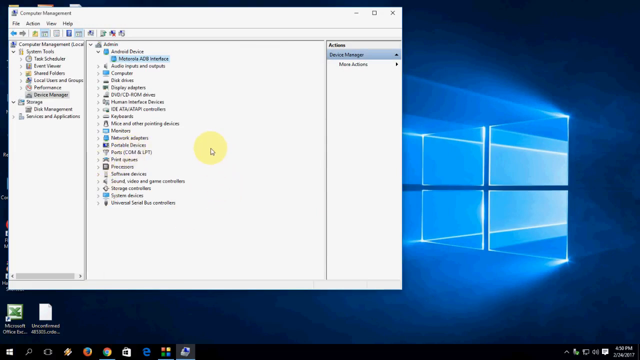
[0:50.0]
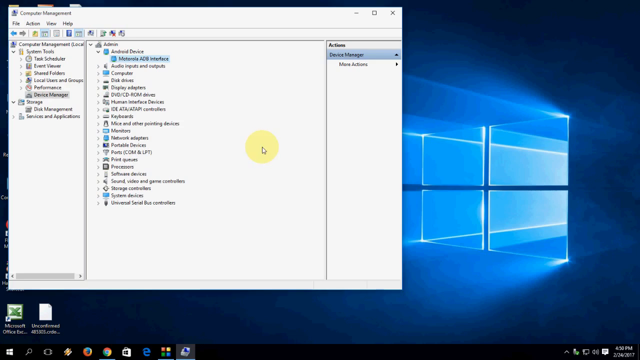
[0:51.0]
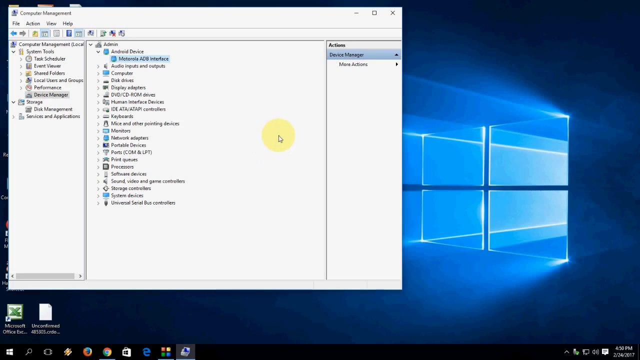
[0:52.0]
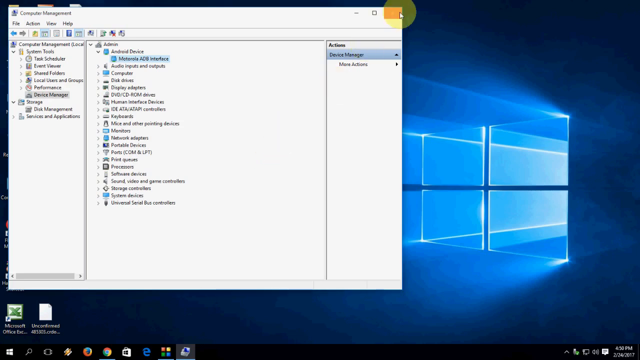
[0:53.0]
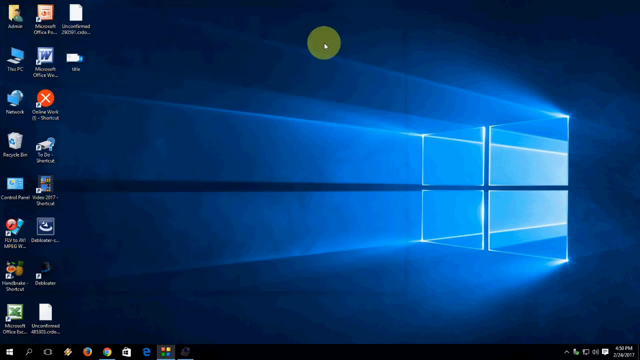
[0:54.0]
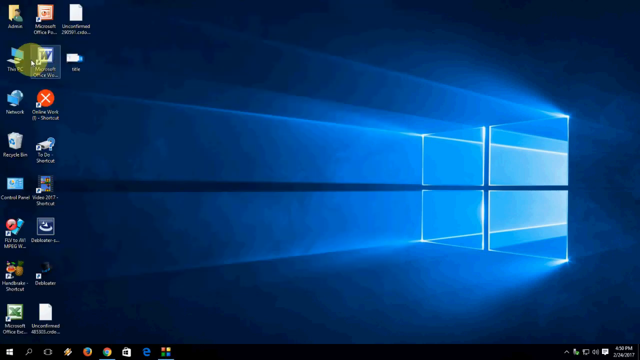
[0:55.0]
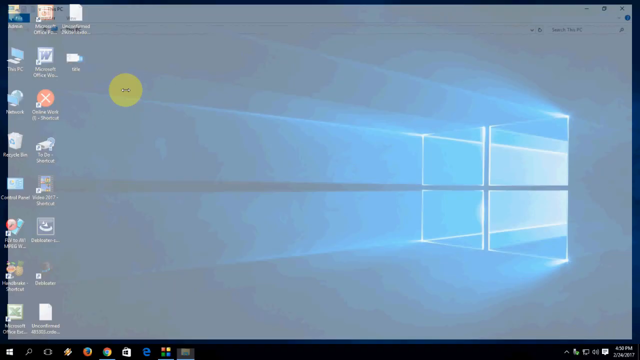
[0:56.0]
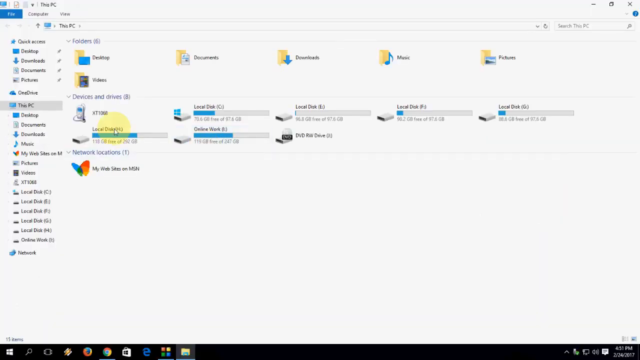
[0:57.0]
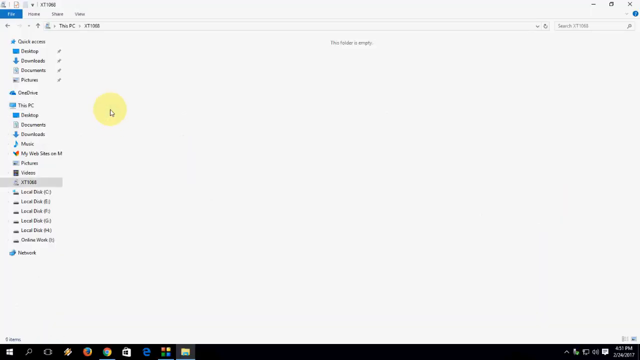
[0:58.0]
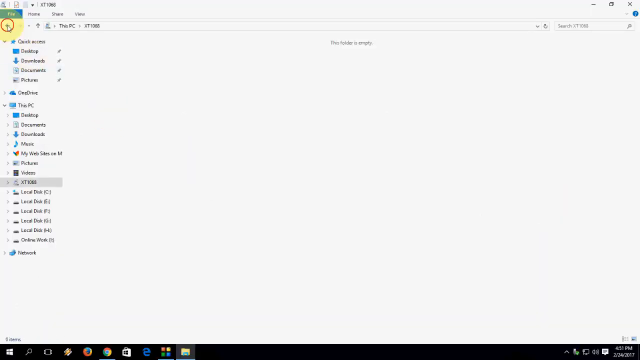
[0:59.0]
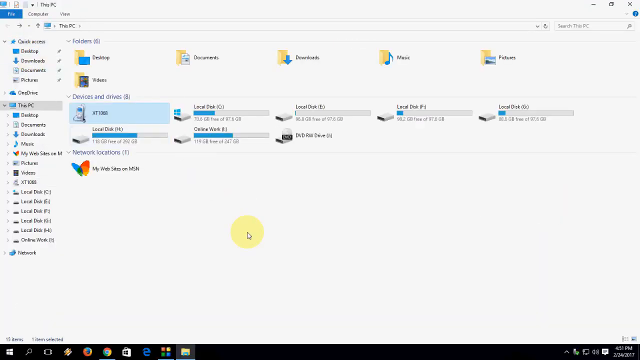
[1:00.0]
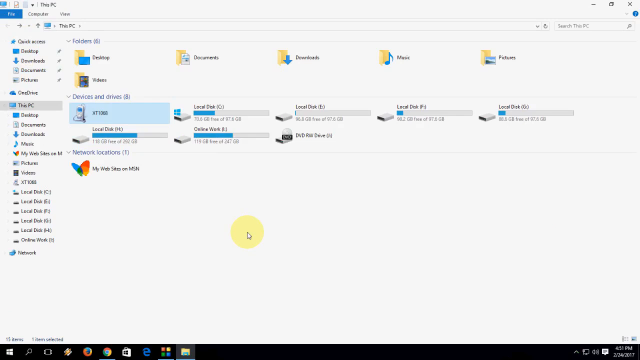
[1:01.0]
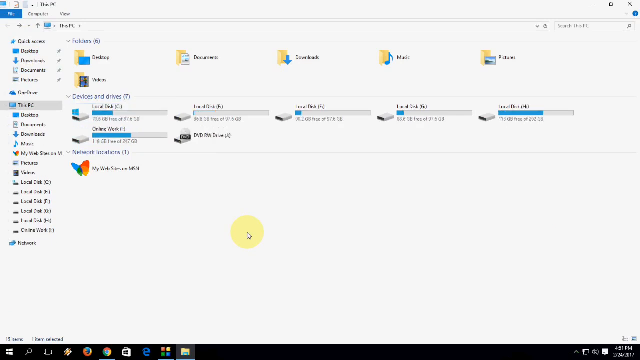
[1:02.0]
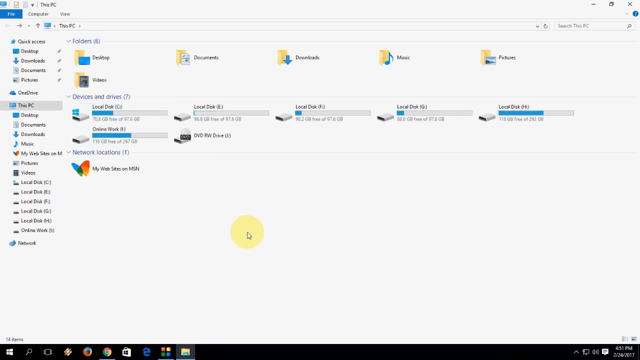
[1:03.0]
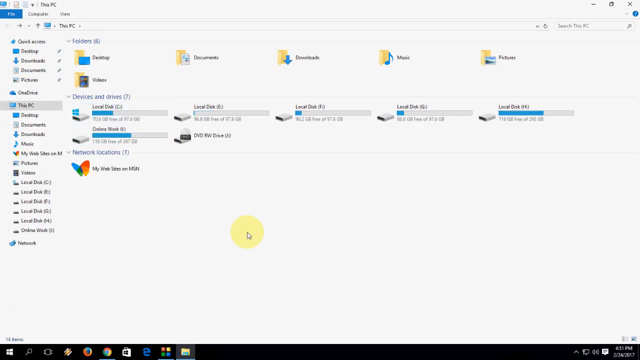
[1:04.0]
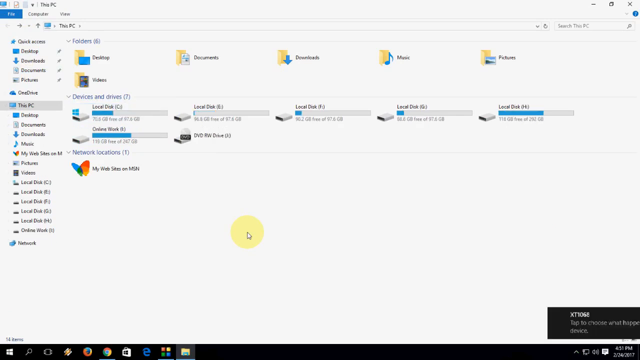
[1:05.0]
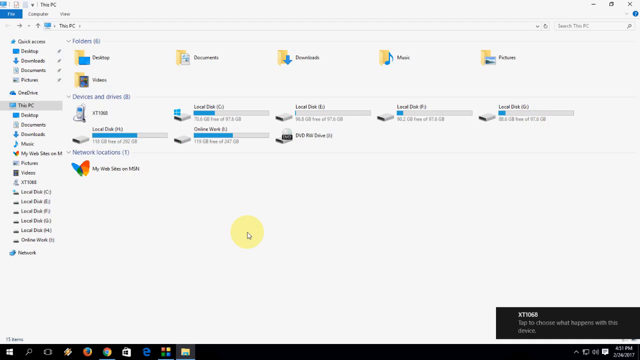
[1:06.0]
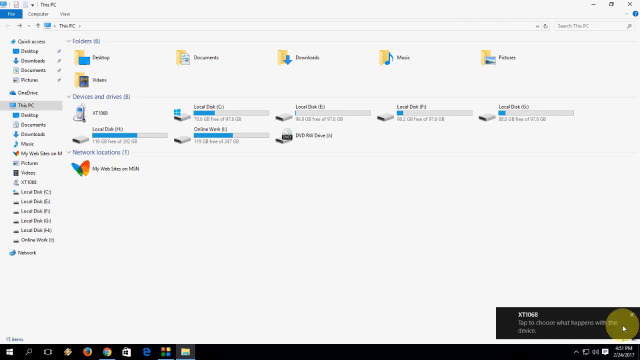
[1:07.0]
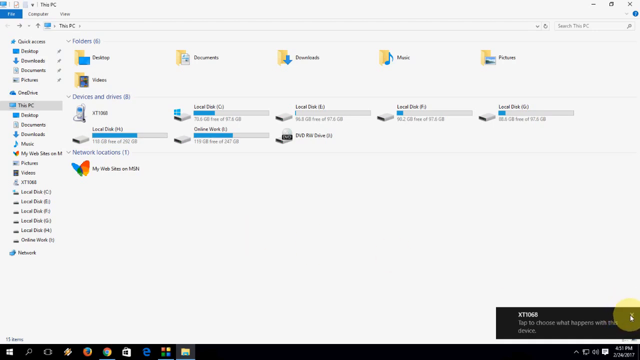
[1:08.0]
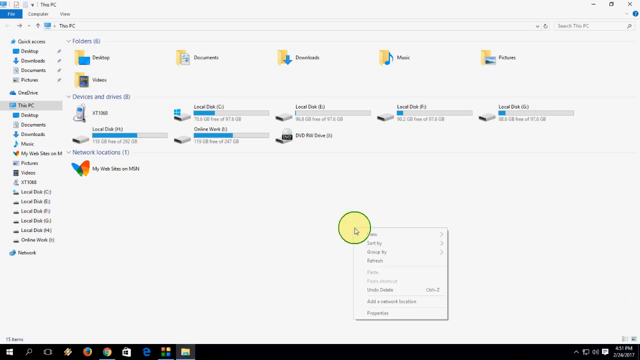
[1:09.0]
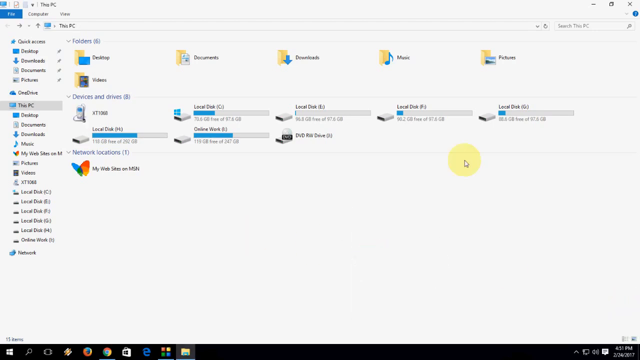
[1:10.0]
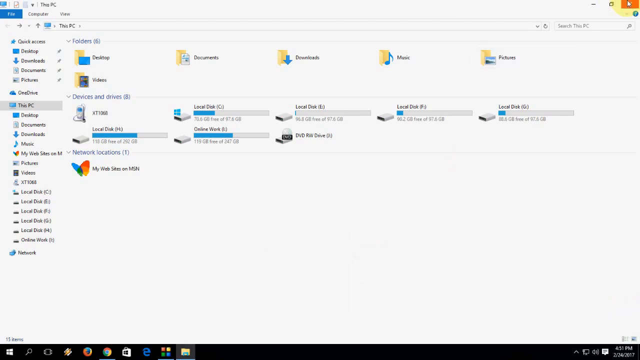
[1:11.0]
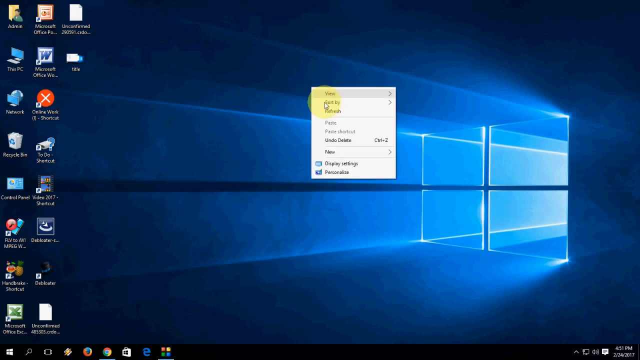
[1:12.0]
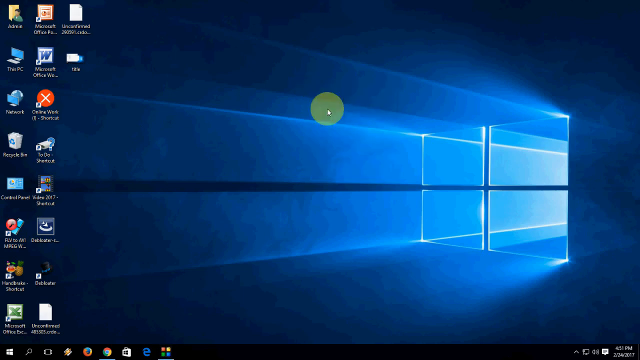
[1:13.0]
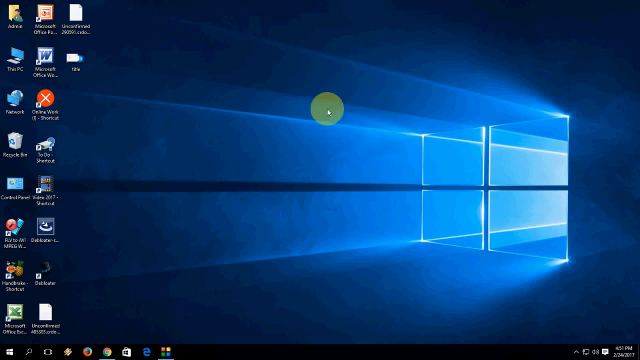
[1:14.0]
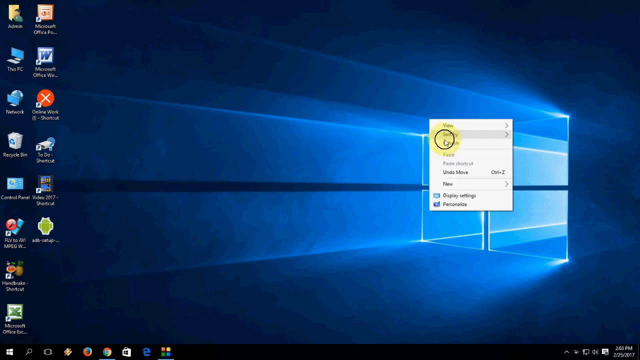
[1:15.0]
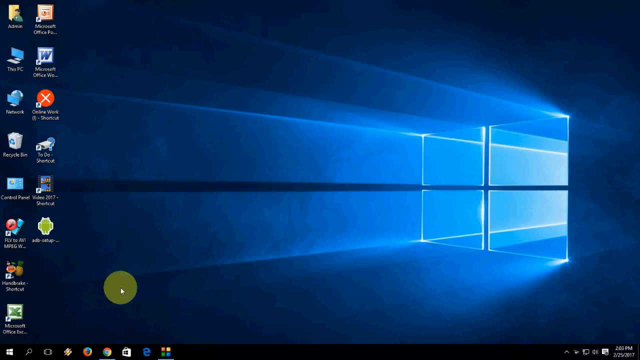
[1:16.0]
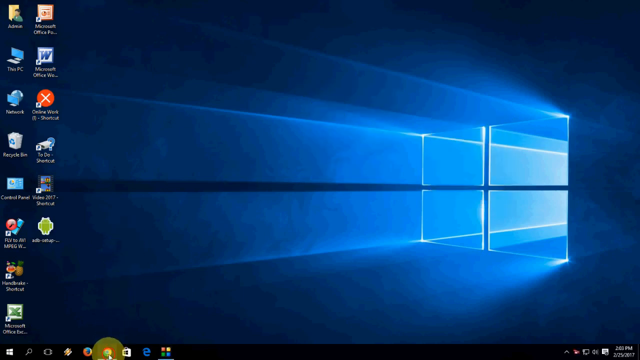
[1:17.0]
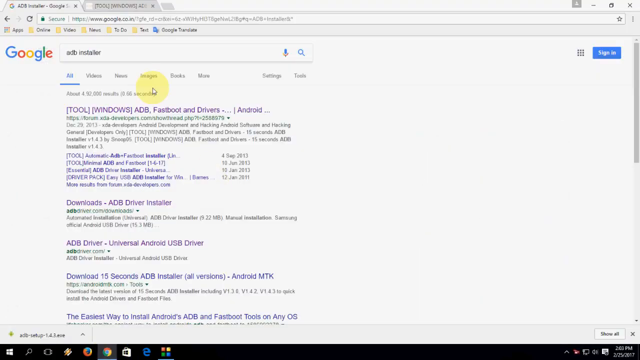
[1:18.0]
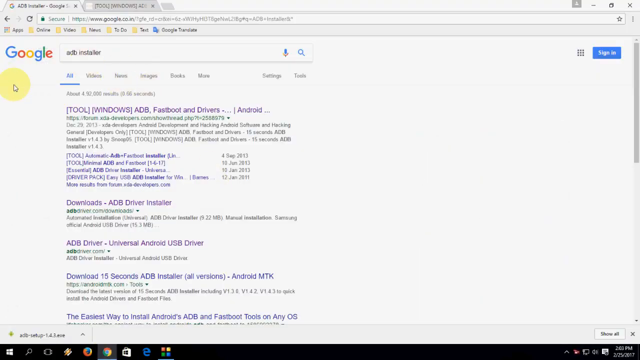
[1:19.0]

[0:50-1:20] The person moves the cursor to the upper corner and clicks the "X" button to close the Computer Management window. They re-select the This PC icon on the home screen with the mouse and navigate the primary folders and the various storage and input devices active in the system. Next they go down to the access bar at the bottom of the screen, which holds a selection of icons, and click on the Google Chrome icon. A Google page window opens, showing a selection of information.